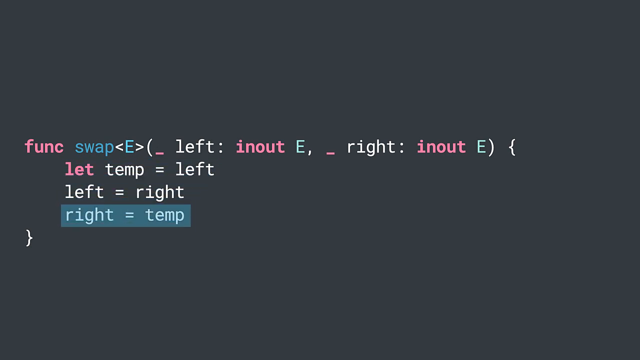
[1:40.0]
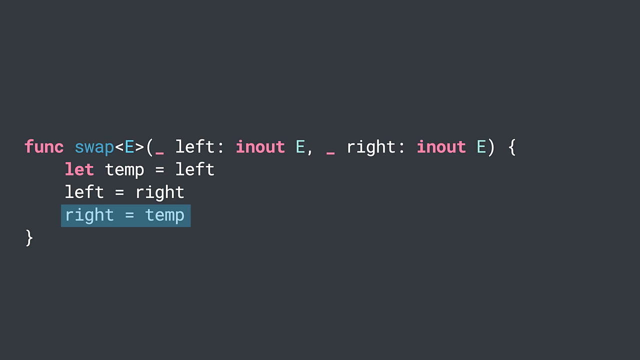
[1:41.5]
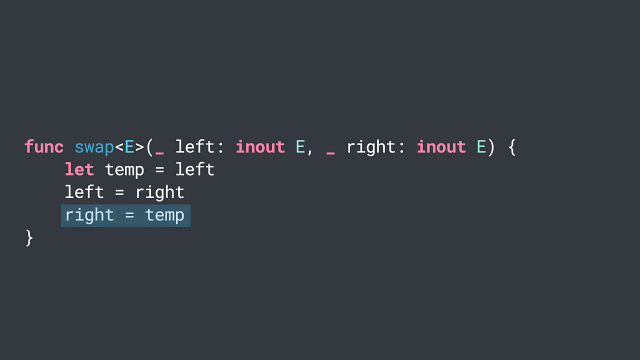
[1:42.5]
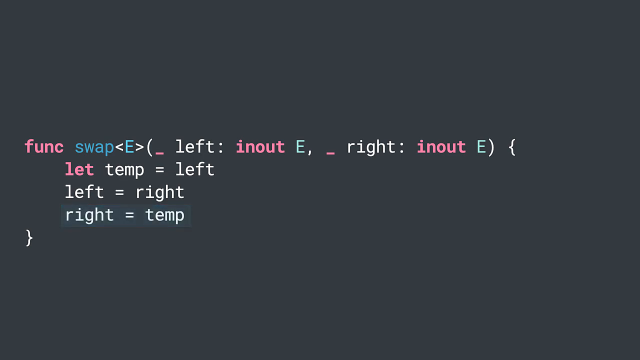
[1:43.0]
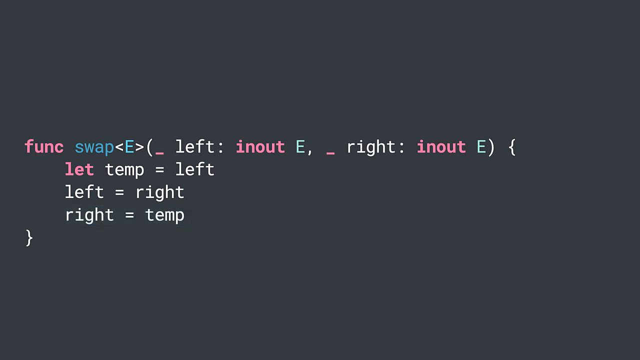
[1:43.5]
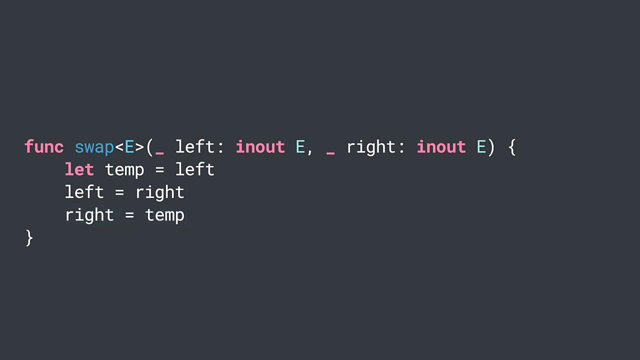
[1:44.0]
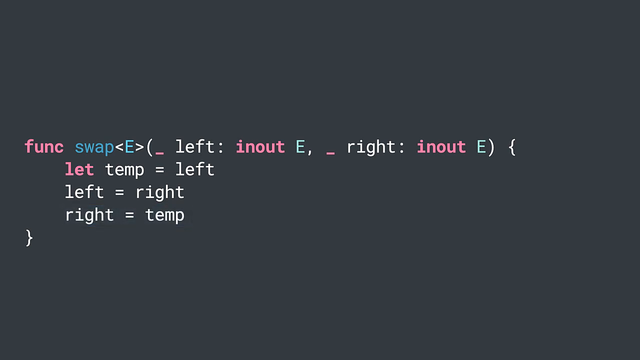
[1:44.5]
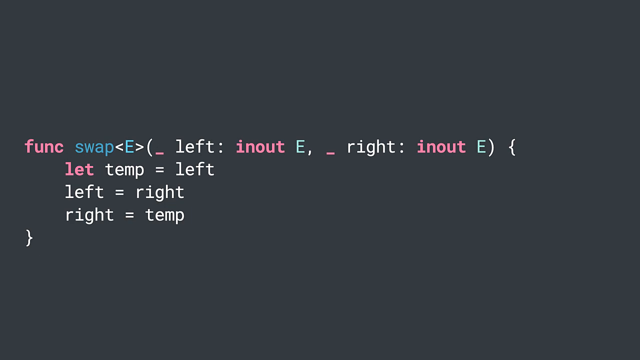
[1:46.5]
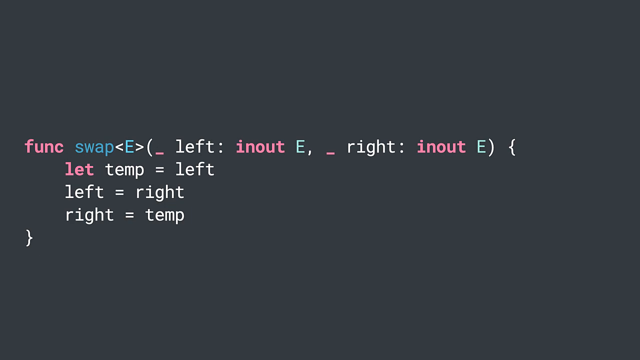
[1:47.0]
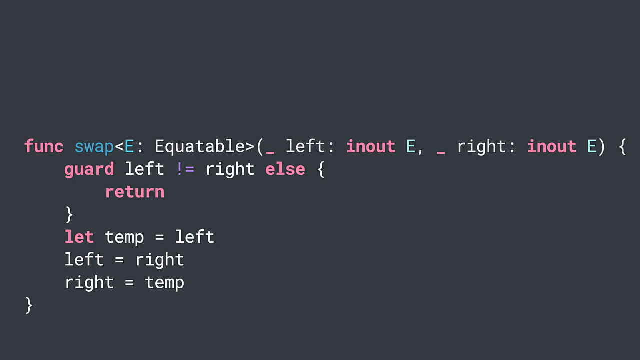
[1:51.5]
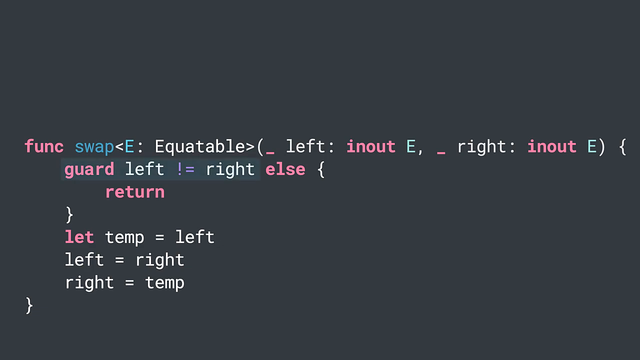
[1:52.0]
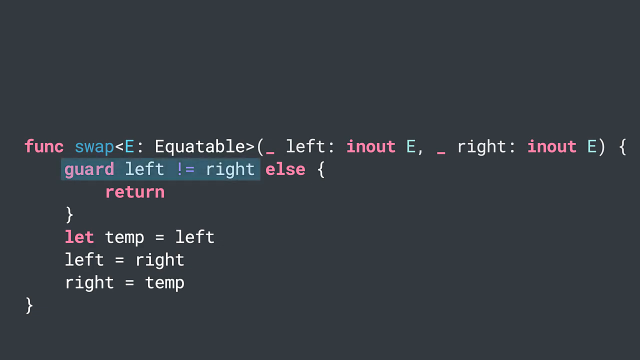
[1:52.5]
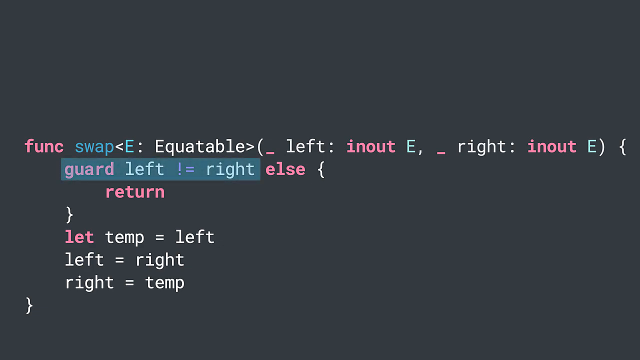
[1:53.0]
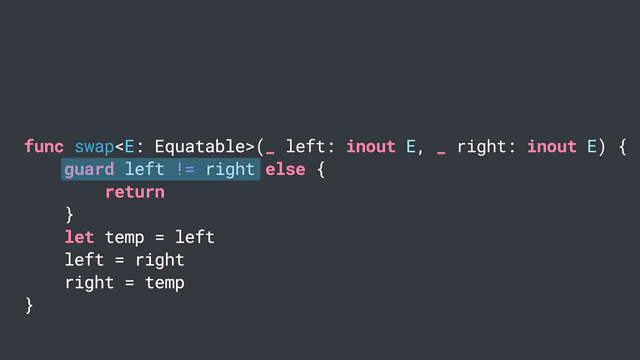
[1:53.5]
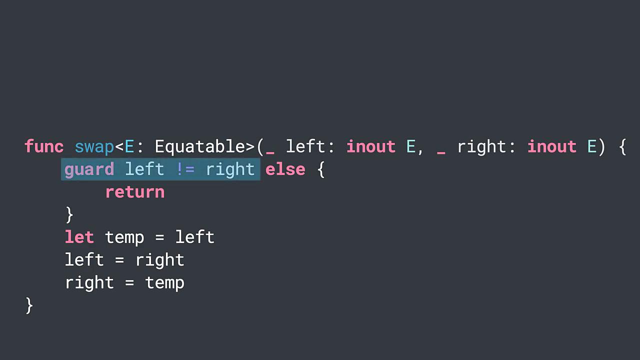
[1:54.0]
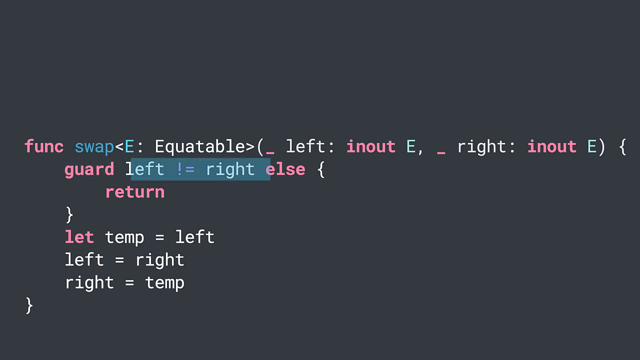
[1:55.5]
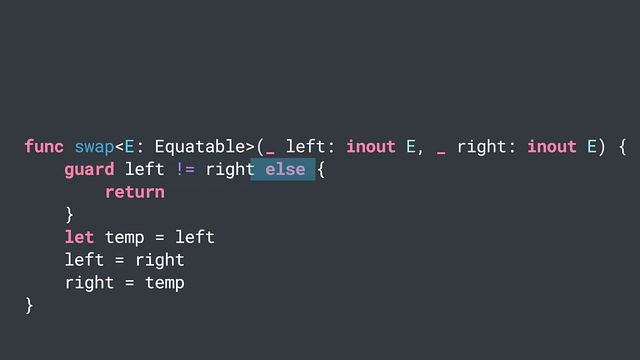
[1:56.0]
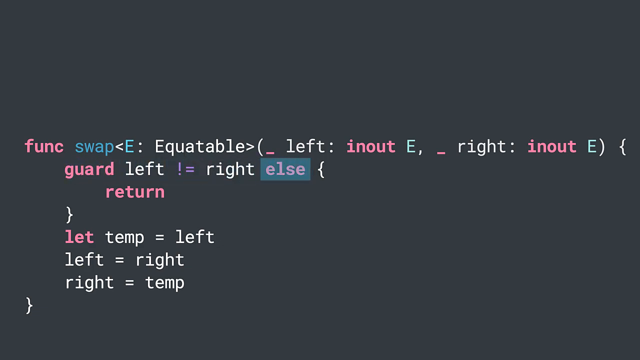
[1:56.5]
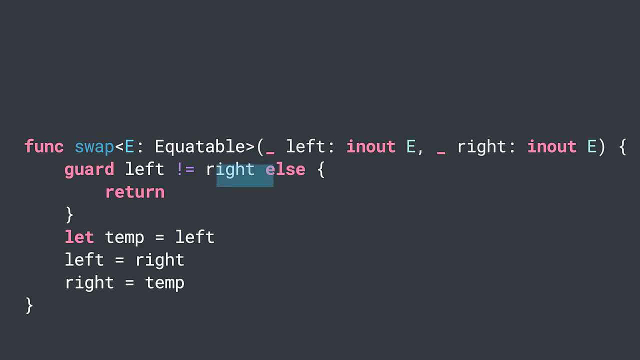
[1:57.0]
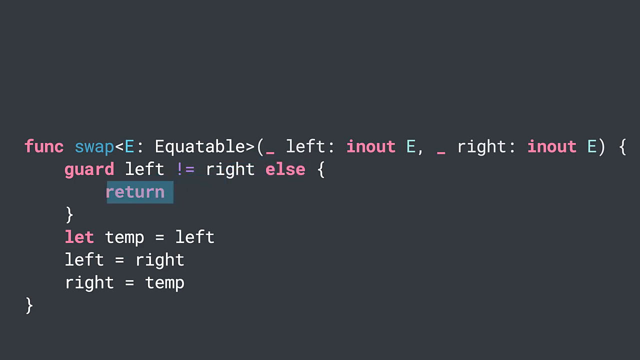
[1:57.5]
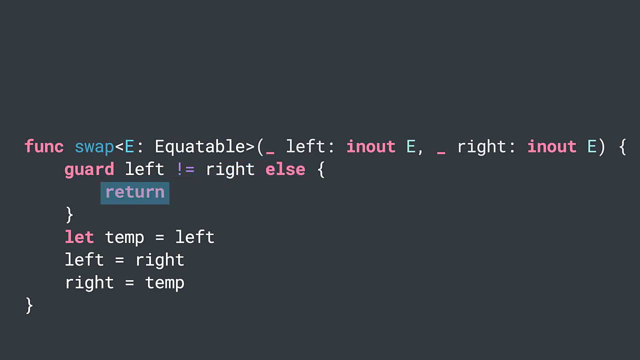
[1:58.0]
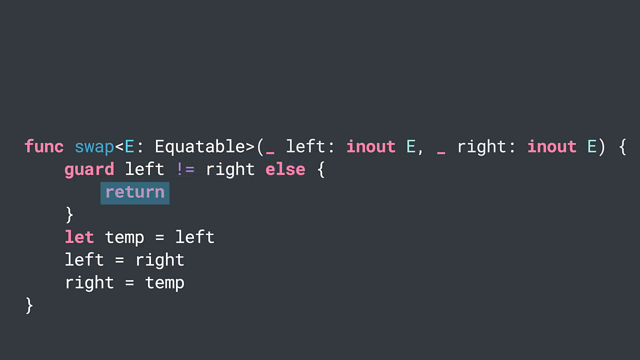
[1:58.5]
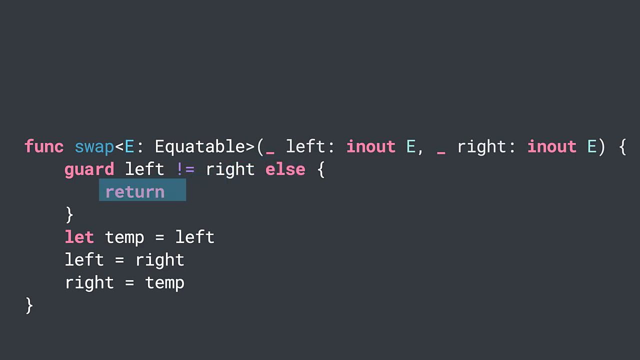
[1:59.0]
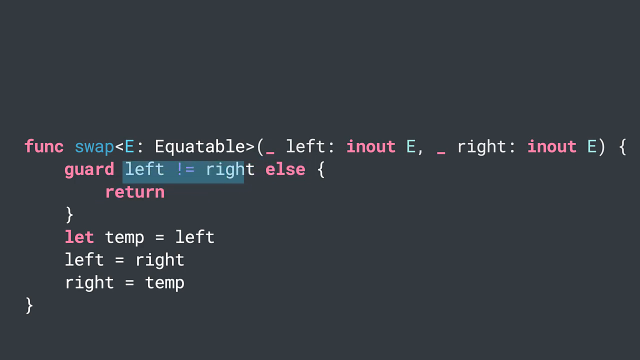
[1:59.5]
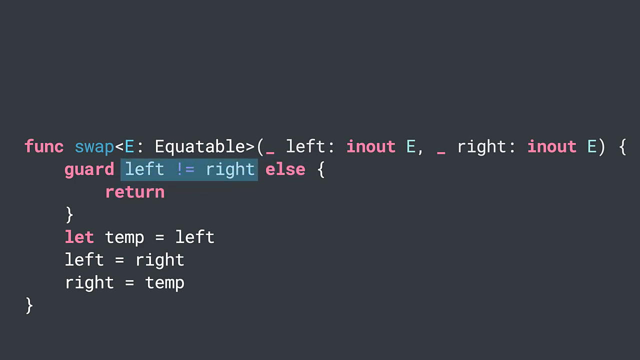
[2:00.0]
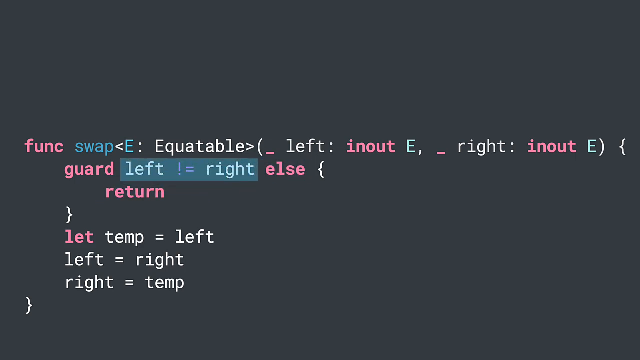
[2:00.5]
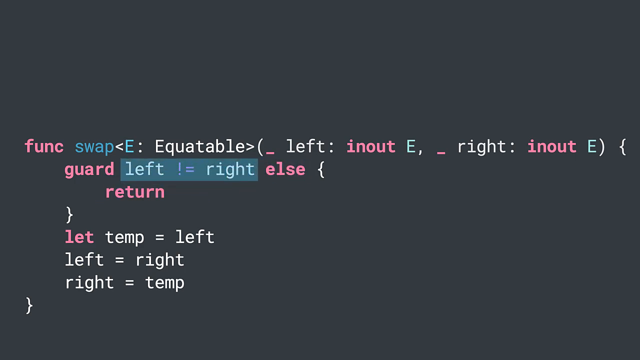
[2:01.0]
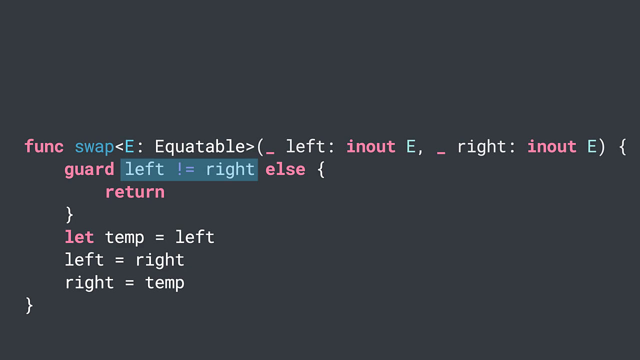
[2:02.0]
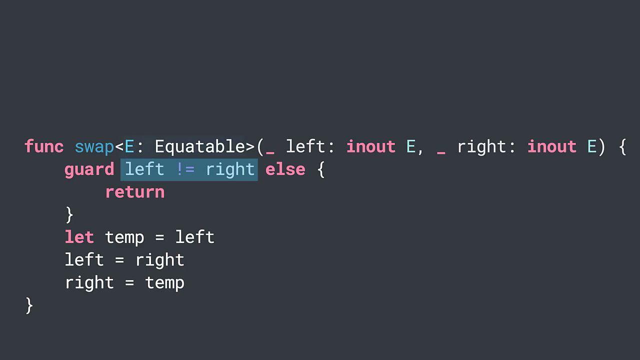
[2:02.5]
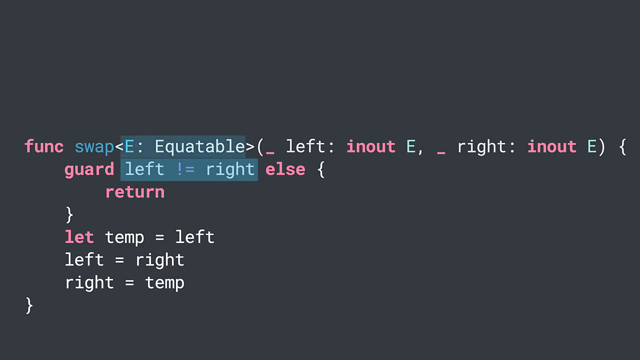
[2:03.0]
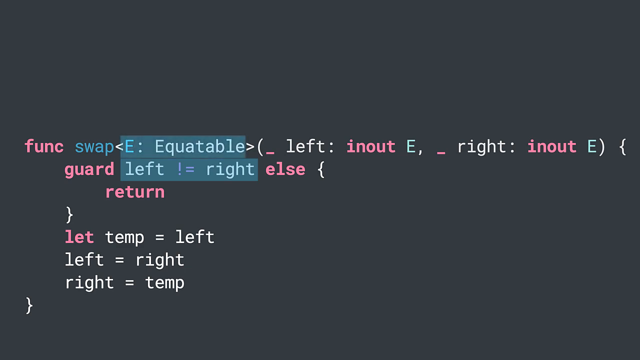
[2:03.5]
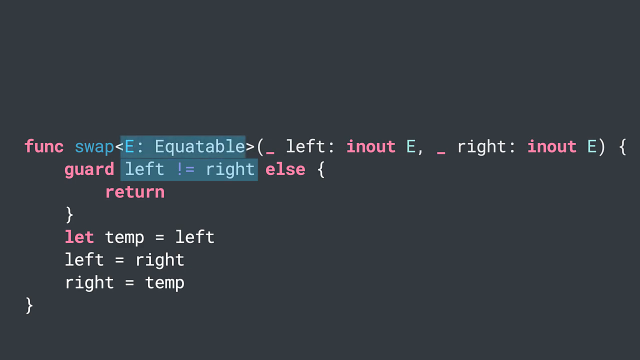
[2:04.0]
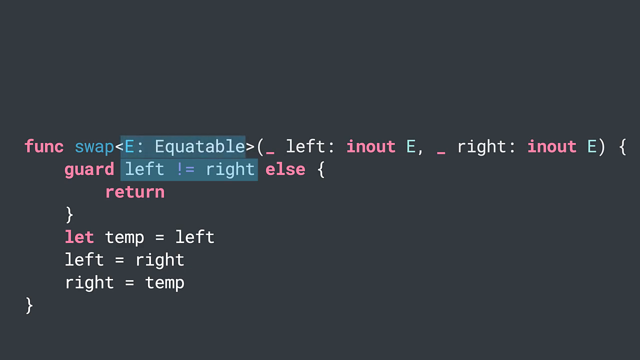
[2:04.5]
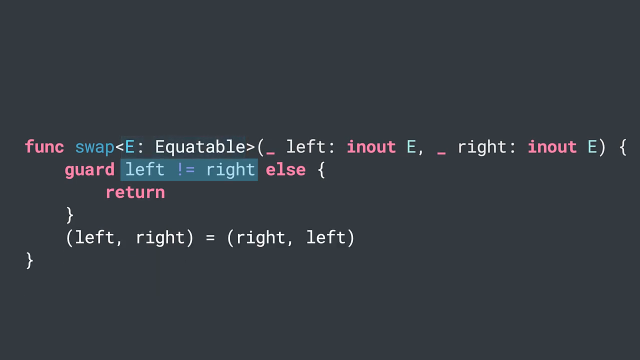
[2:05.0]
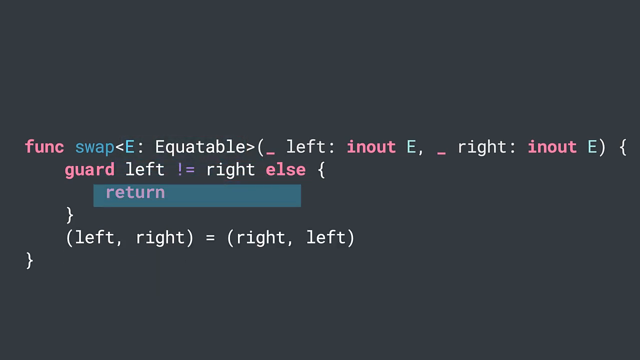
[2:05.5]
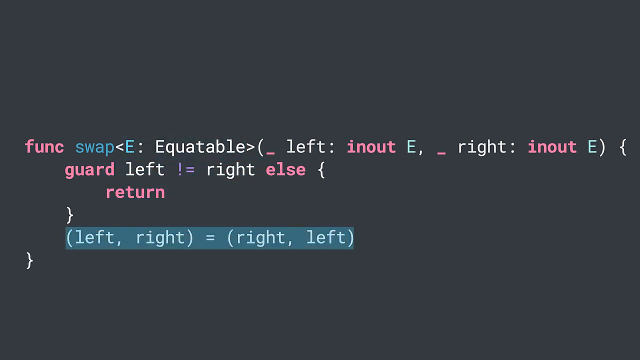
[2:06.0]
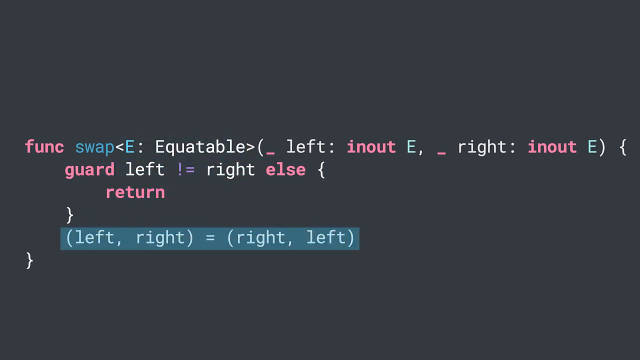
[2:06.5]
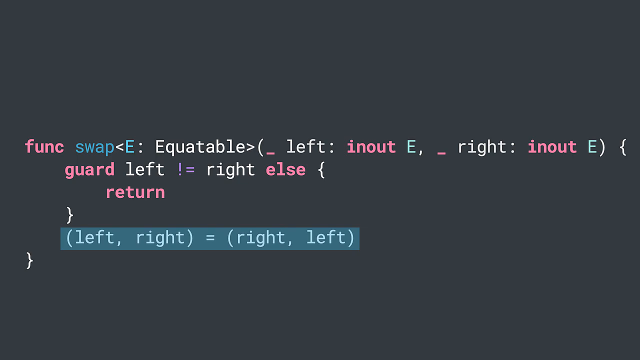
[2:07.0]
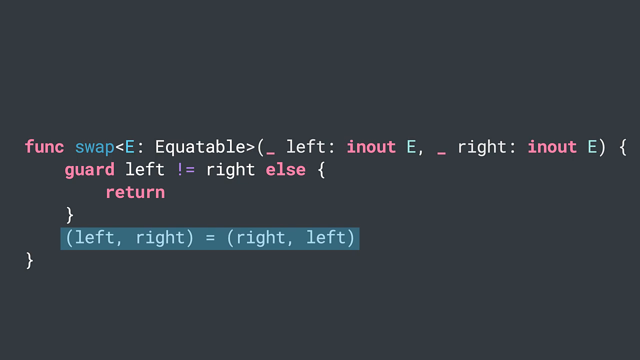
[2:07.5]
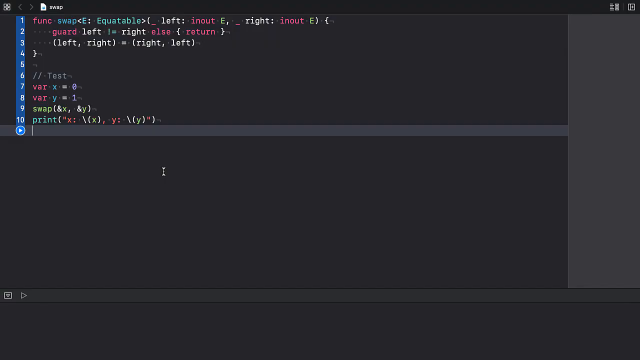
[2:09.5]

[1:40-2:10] A black screen shows a message regarding input. The word "equitable" appears, then "return", and the words "left", "right" and "guard". The words change, and the statement becomes more pronounced and easier to read. For a split second the screen switches to another screen with a message in the upper left-hand corner, then returns to the same message. The text shows "function swap left input" and then changes to "equitable". A blue rectangle moves over the words, highlighting different words at alternating times.